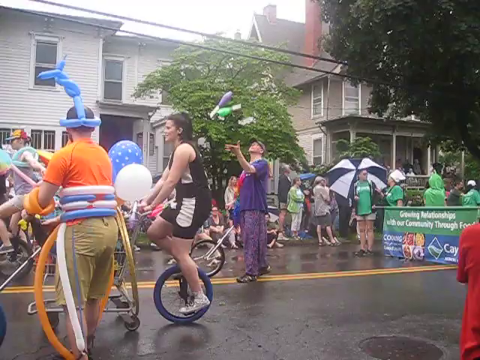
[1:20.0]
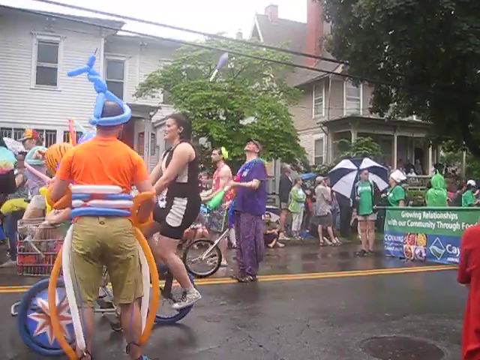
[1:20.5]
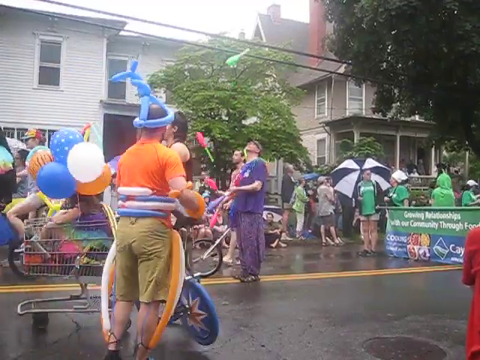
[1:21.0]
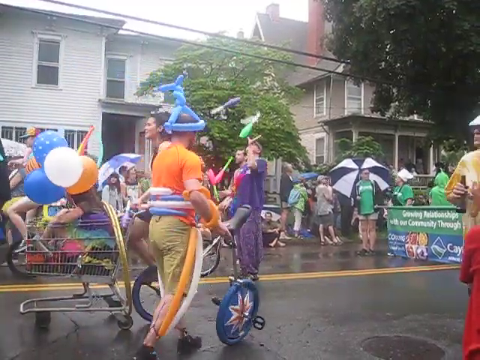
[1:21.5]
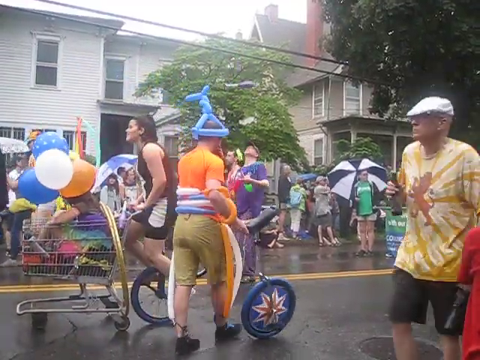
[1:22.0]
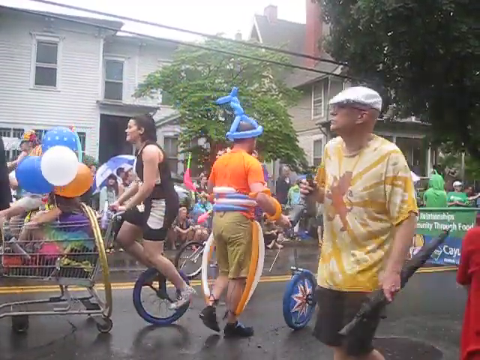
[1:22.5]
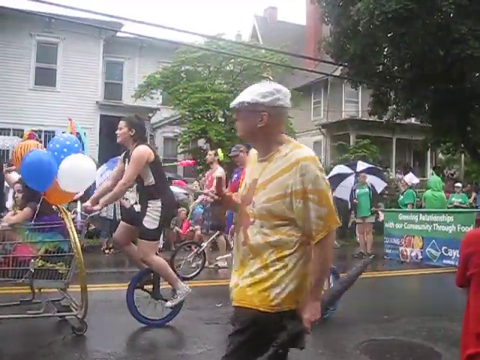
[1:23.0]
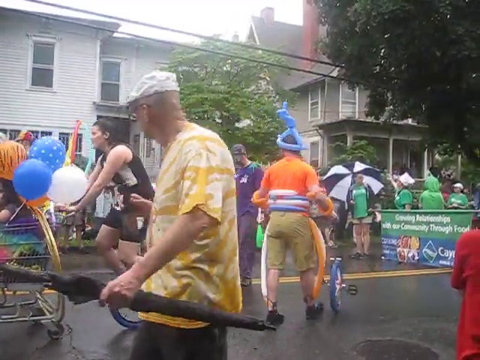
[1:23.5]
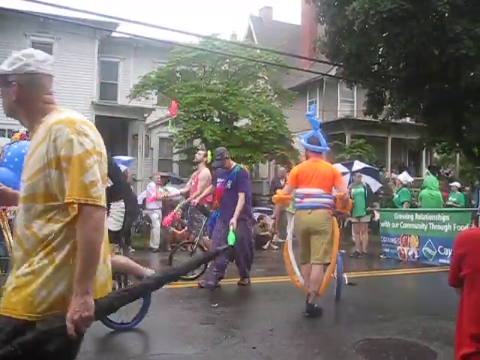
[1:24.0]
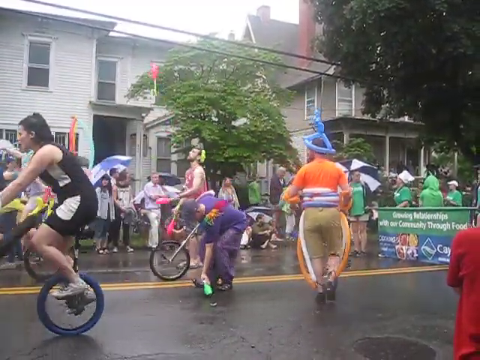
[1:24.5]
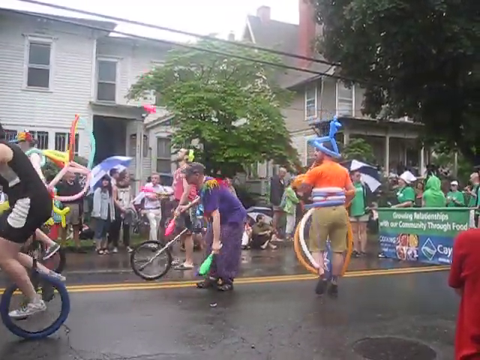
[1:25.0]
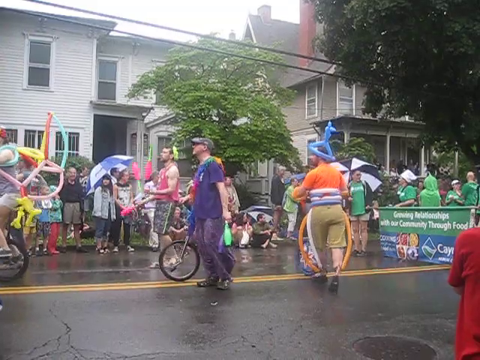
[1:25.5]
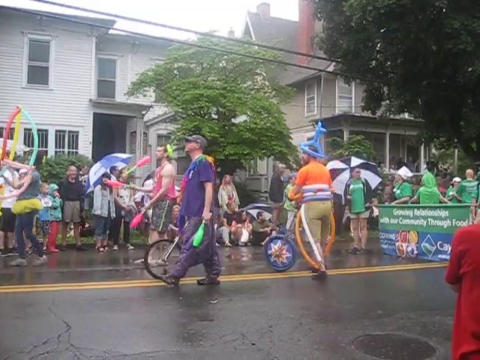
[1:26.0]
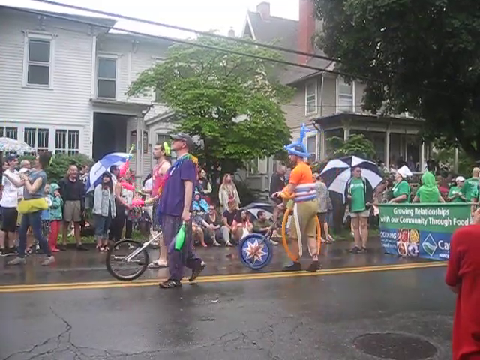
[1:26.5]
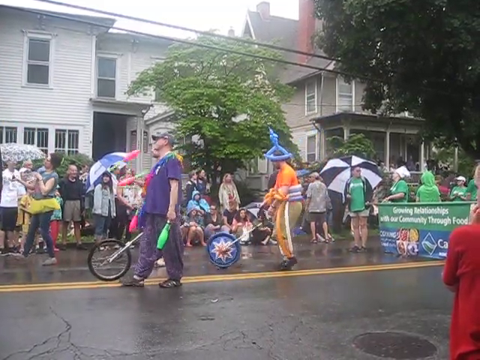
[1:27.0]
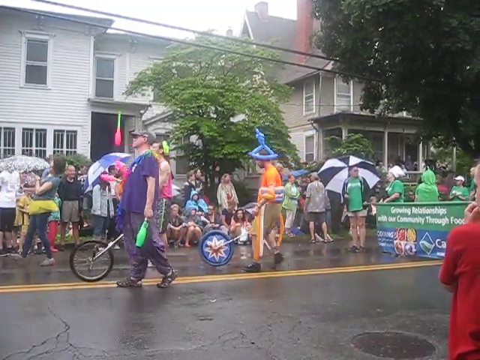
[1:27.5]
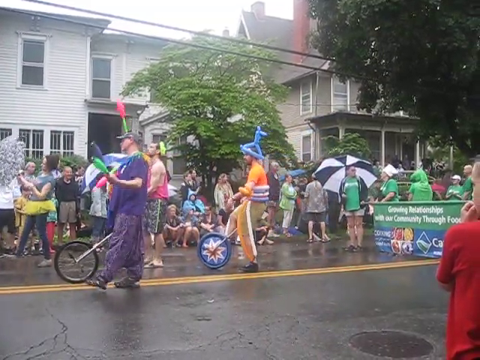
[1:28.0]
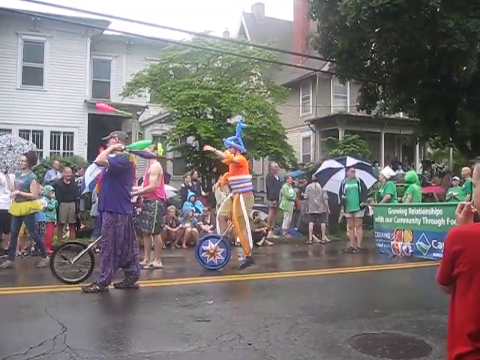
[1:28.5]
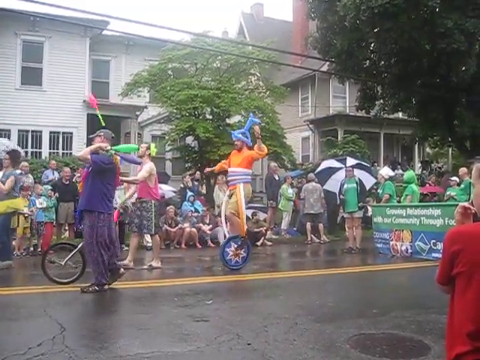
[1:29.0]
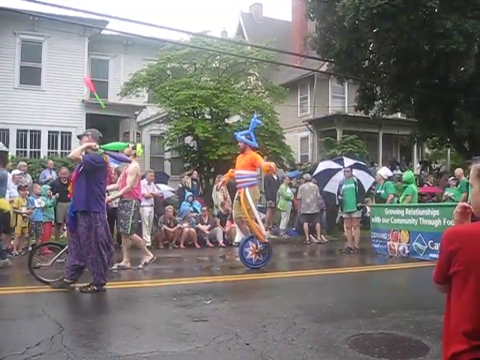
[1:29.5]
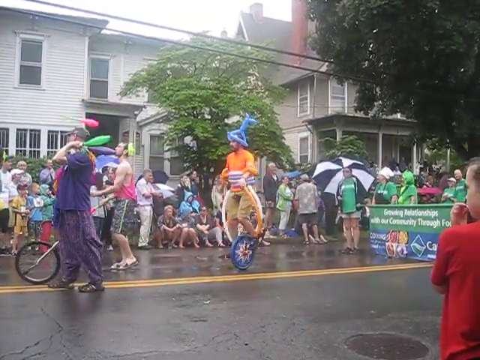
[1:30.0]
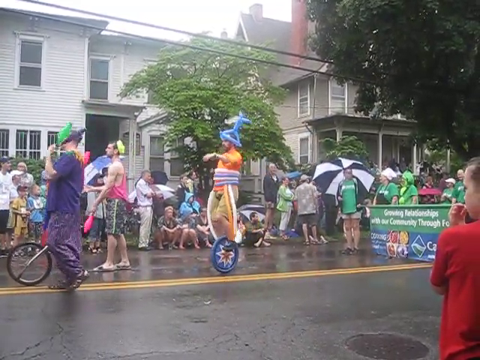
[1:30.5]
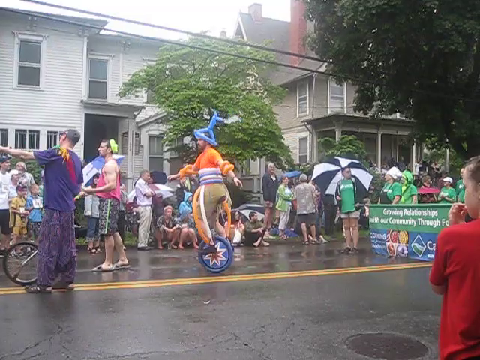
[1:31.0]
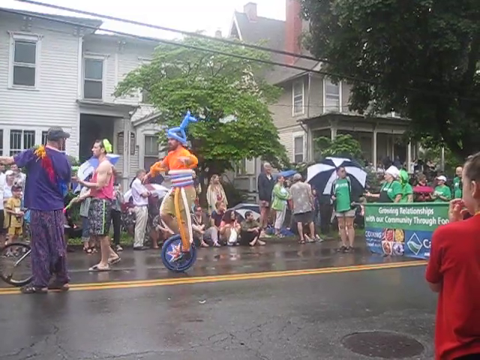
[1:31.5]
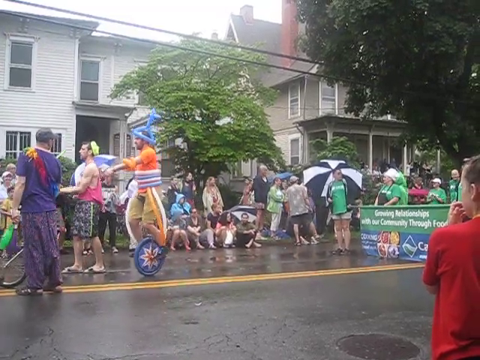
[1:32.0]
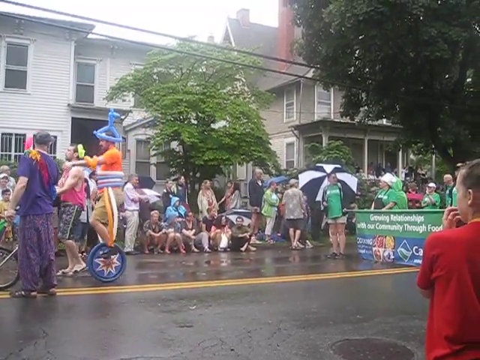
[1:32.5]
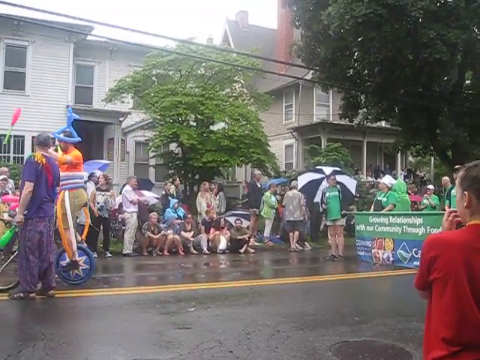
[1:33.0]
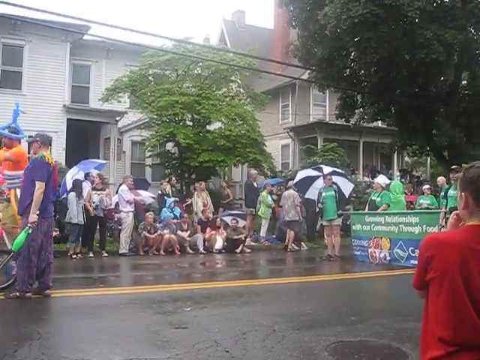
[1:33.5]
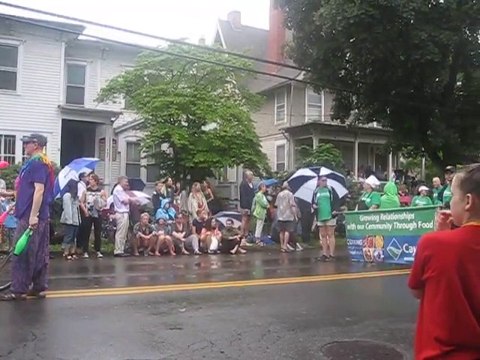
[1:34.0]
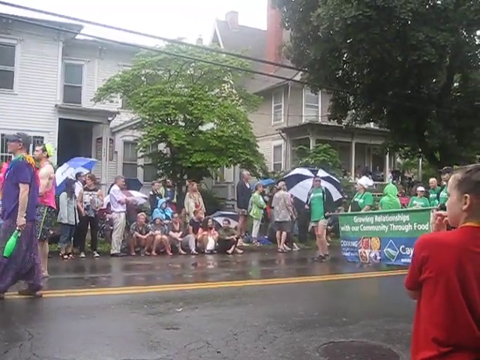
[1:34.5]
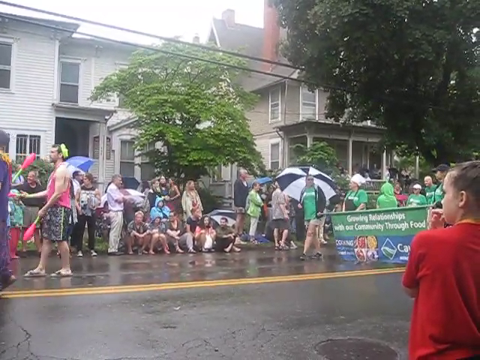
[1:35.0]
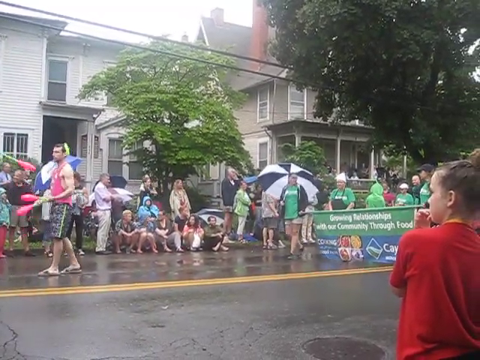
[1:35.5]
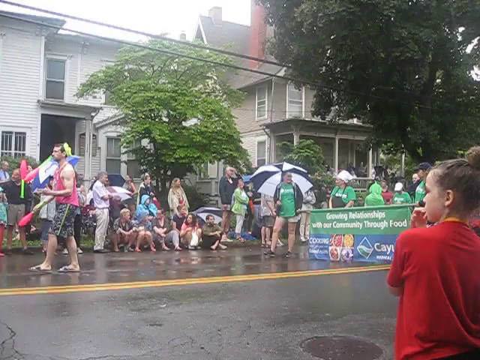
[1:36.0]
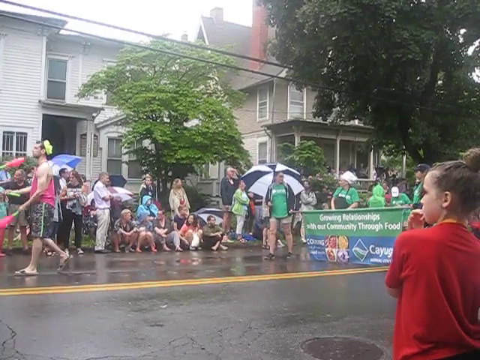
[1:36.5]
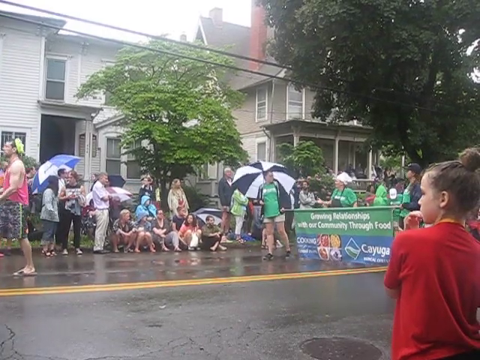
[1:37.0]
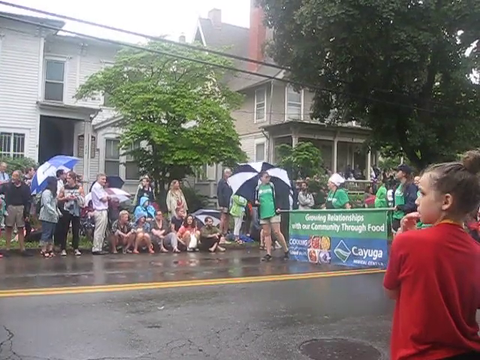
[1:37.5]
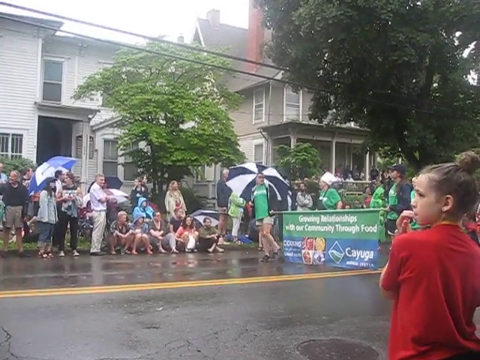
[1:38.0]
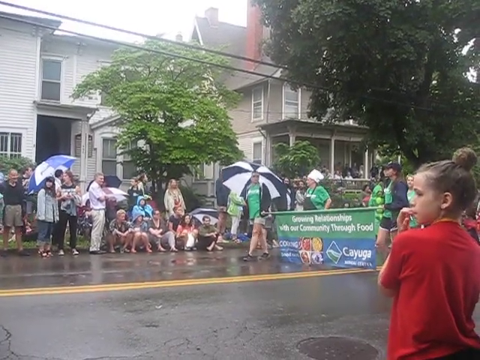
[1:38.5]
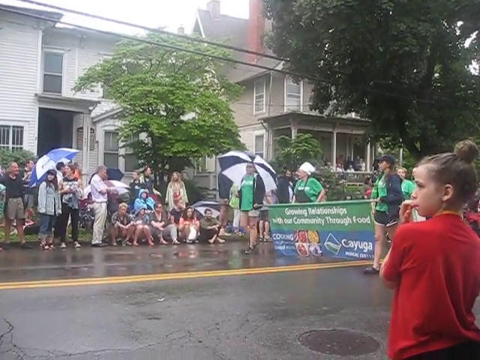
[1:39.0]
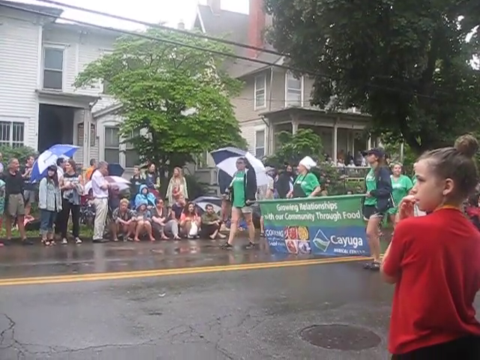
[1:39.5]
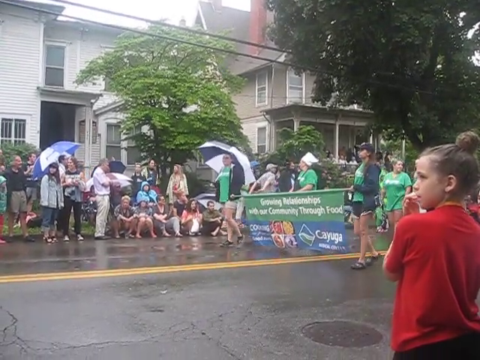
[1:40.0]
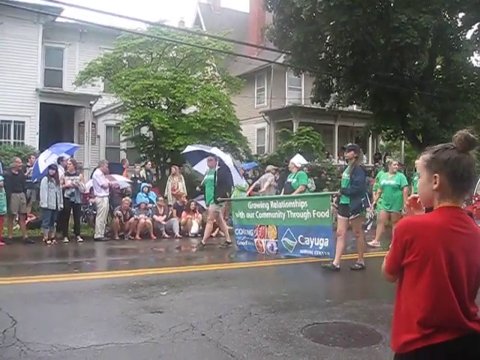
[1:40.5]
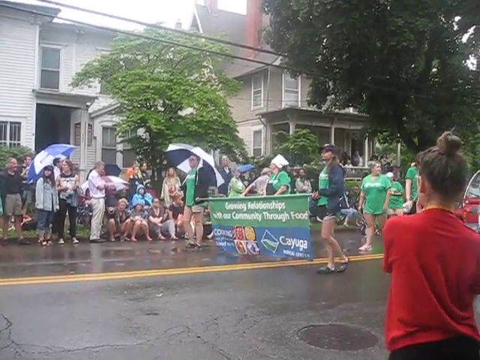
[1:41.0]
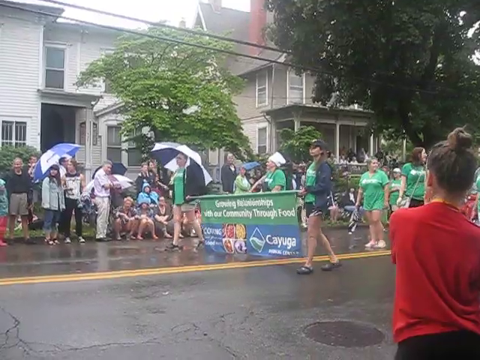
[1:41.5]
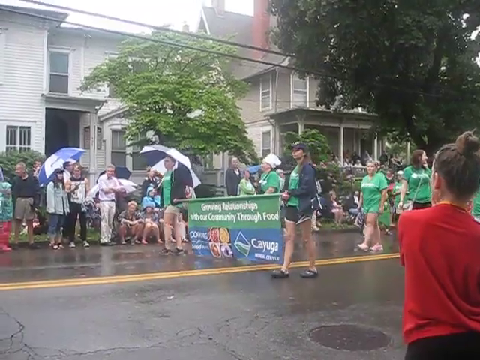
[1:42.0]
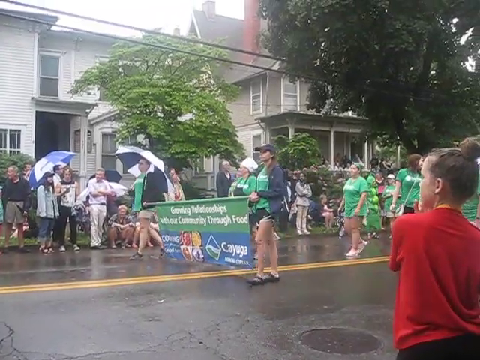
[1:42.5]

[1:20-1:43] On a street in a town procession, big detached houses are in the background, and spectators on the pavement sit on the floor or crouch down, some carrying umbrellas. The floor is wet, and different groups of people process through the town. The first group, the local circus school, has just passed the camera and is still visible: a number of kind of hippie-looking characters on unicycles juggle, and a man has lots of moulded balloons on his head and around his waist. They wait, as the procession seems to have stopped briefly. A man in a tie-dye t-shirt and a cap, holding an umbrella, walks by the camera, and a juggler drops his baton. He picks it up and they start to move. The man with all the balloons gets on his unicycle and rides off, and the next group of people comes along.